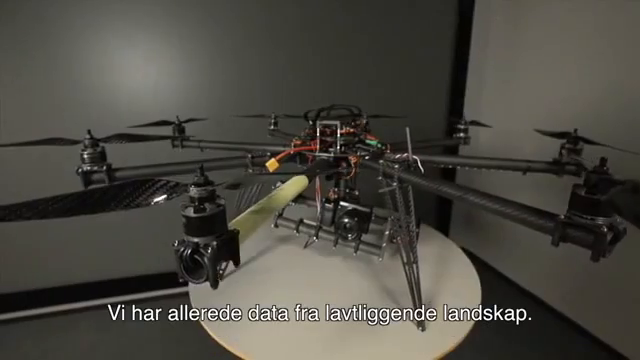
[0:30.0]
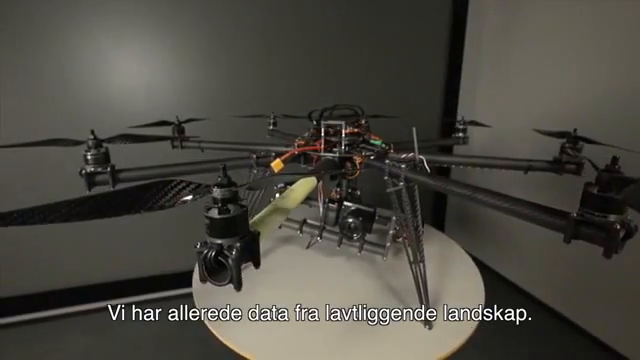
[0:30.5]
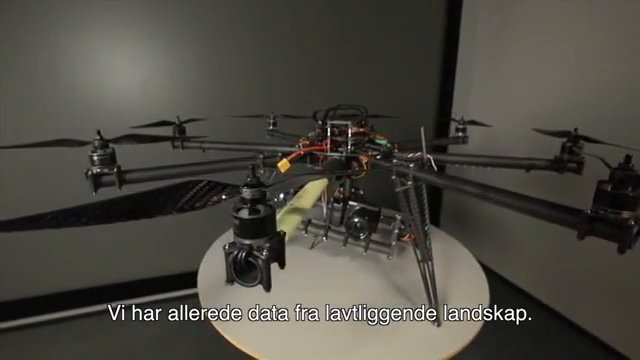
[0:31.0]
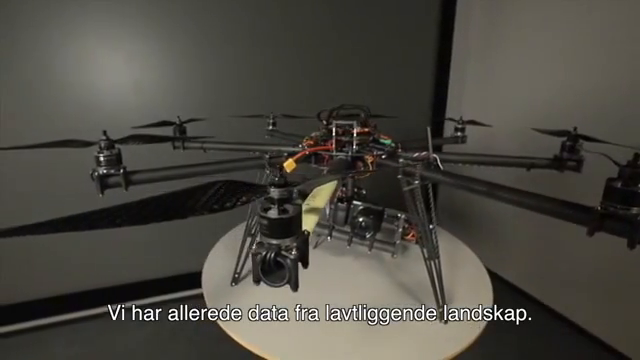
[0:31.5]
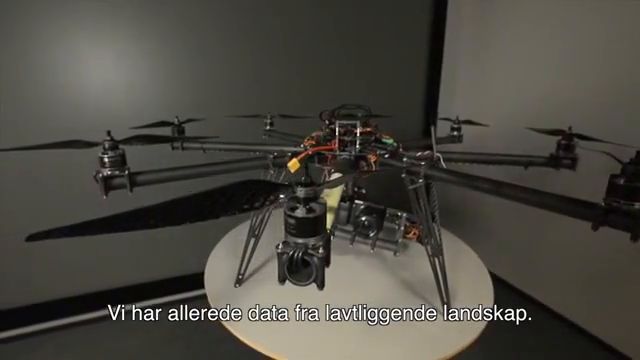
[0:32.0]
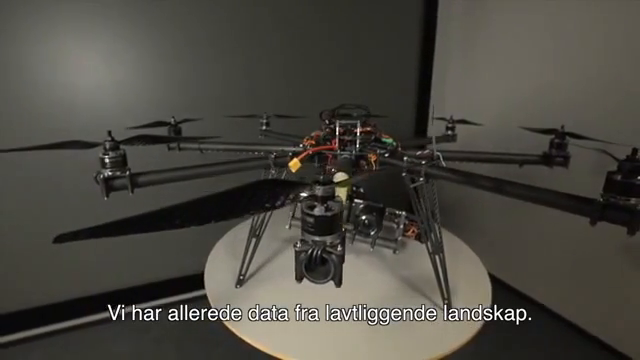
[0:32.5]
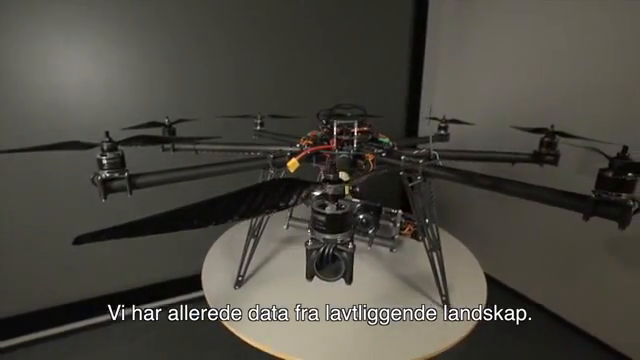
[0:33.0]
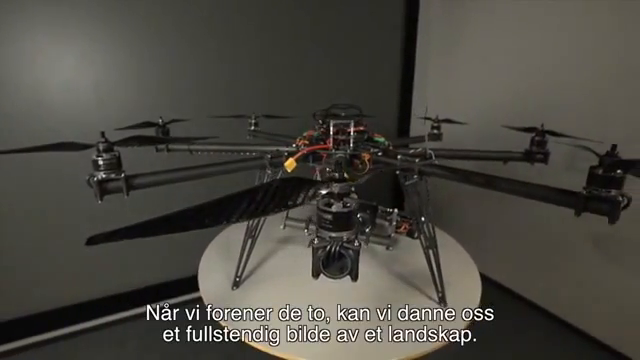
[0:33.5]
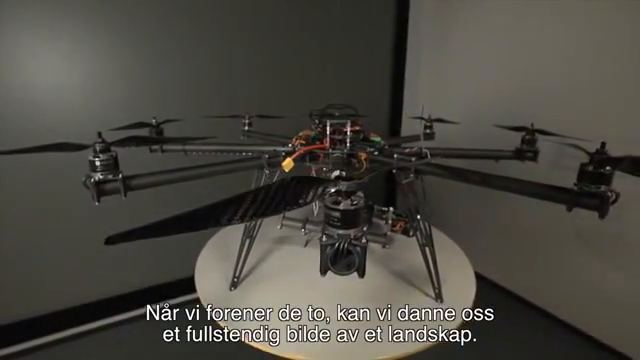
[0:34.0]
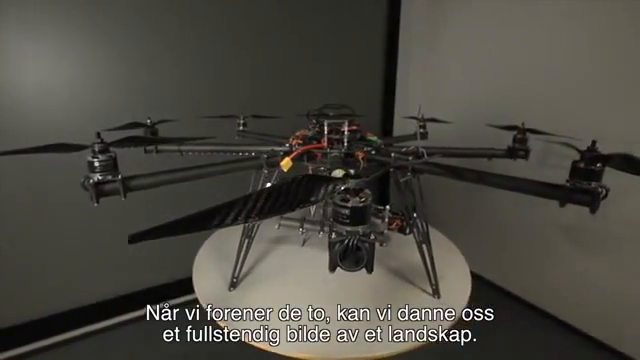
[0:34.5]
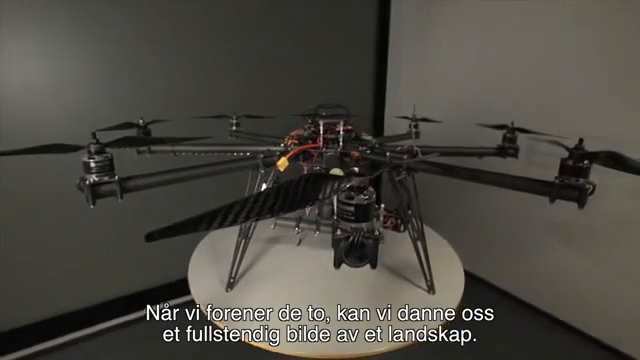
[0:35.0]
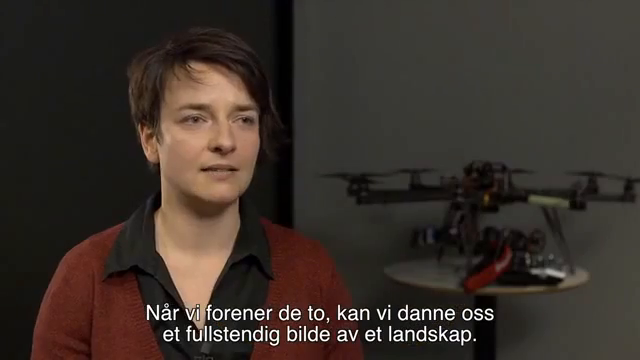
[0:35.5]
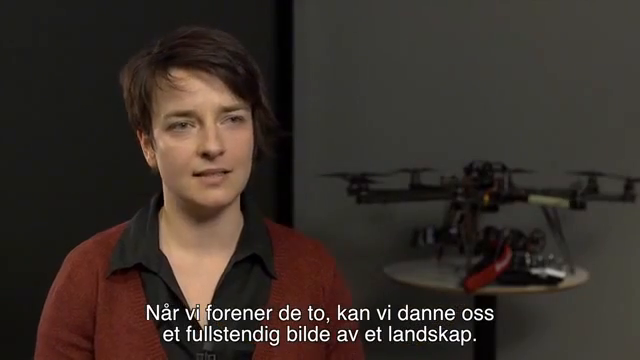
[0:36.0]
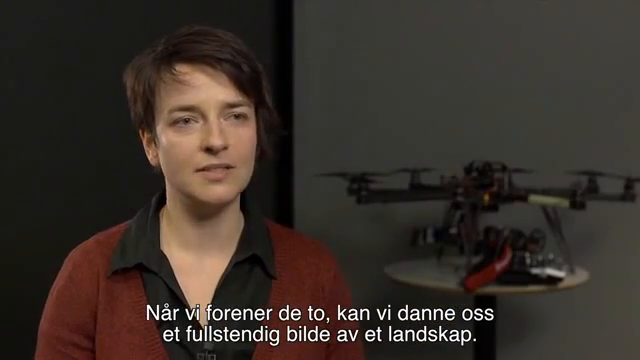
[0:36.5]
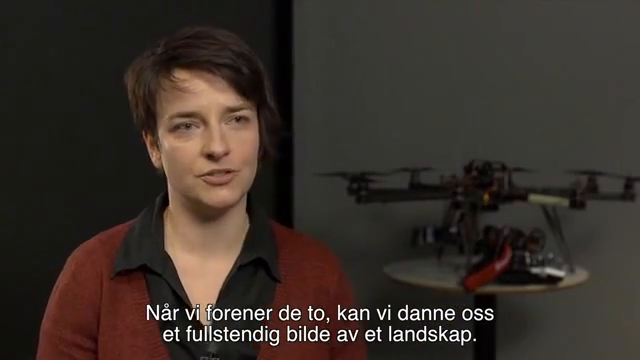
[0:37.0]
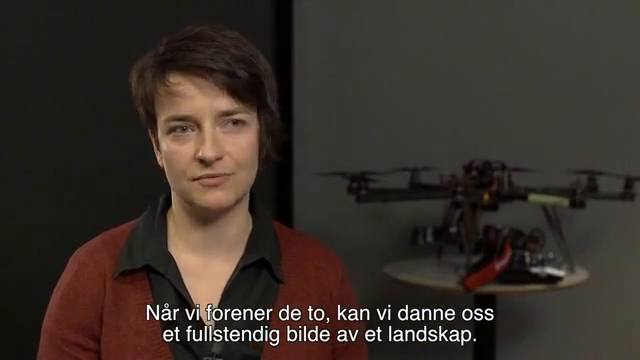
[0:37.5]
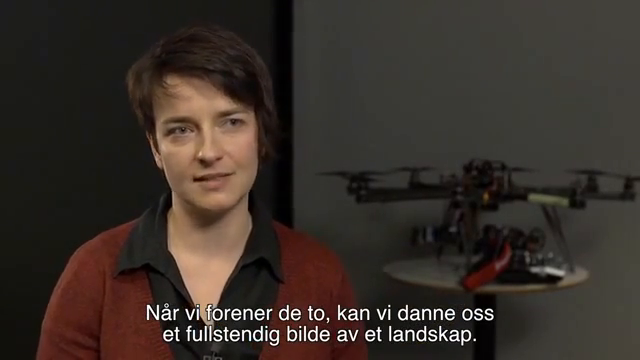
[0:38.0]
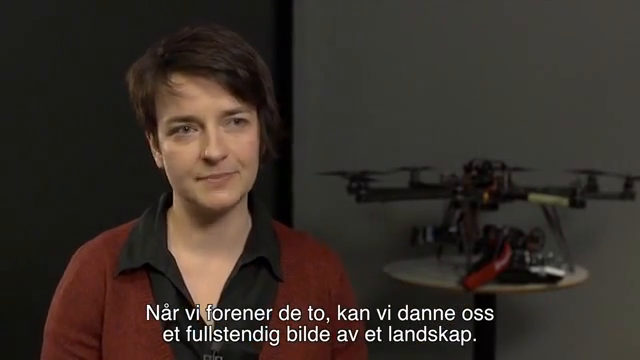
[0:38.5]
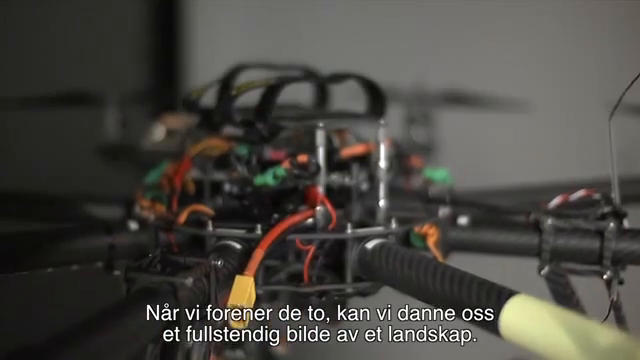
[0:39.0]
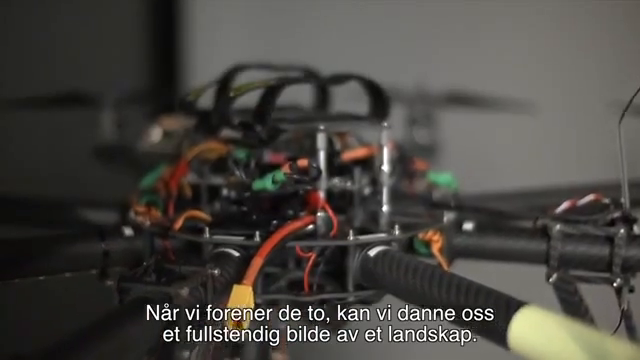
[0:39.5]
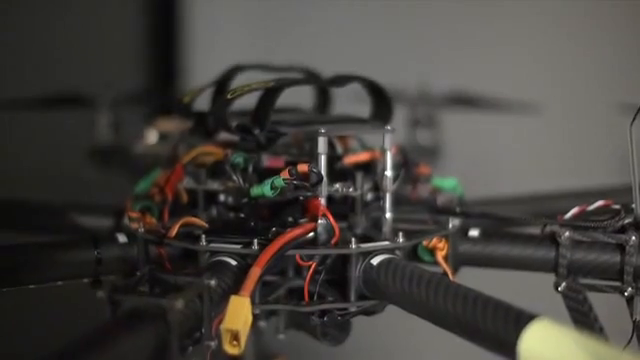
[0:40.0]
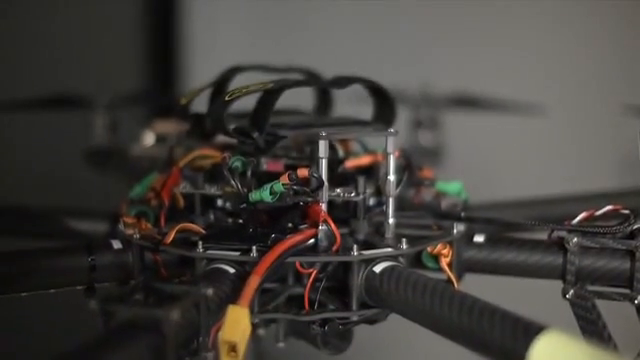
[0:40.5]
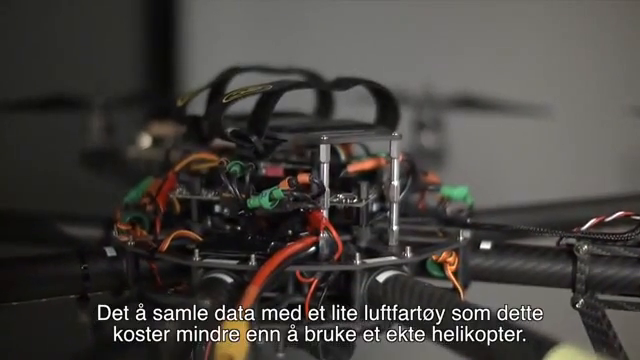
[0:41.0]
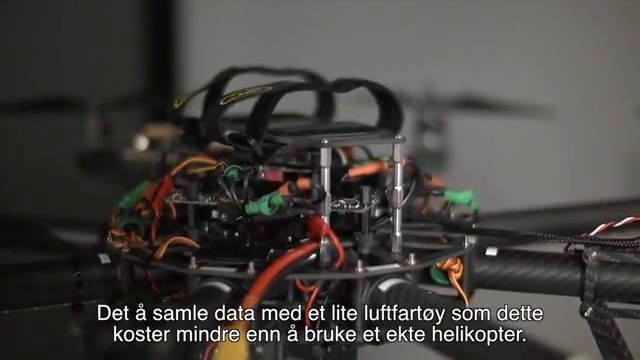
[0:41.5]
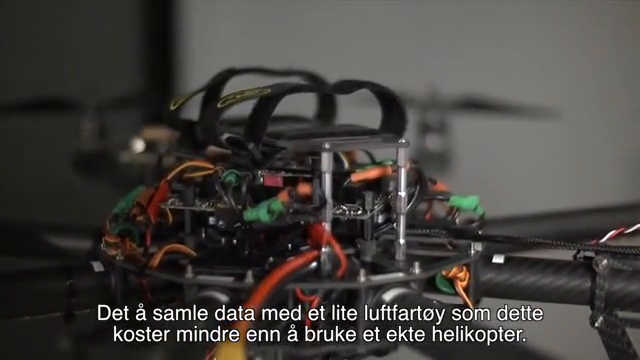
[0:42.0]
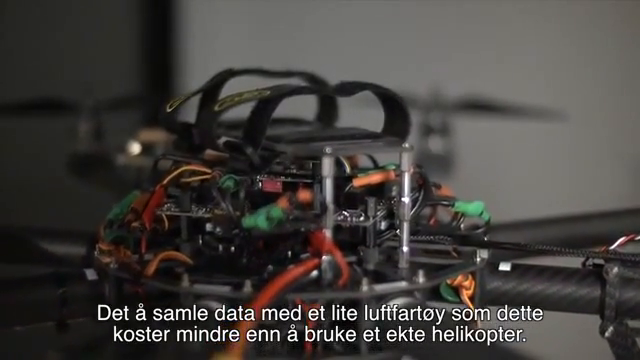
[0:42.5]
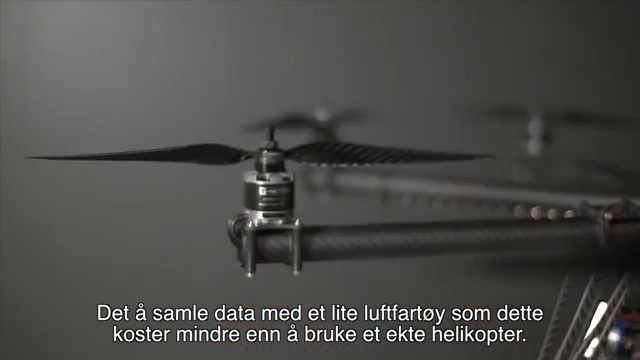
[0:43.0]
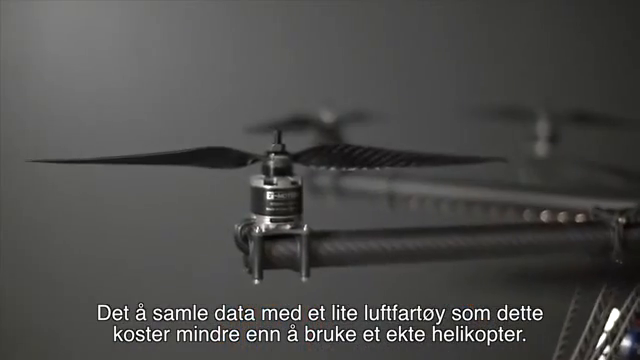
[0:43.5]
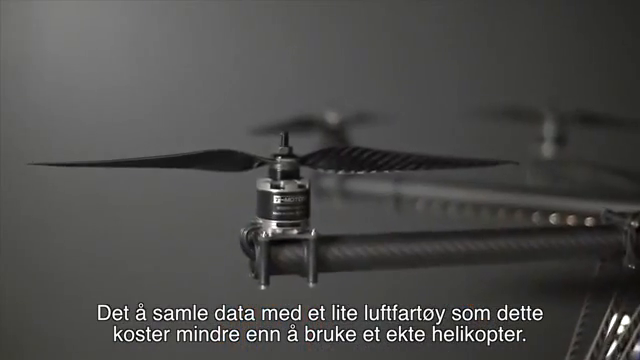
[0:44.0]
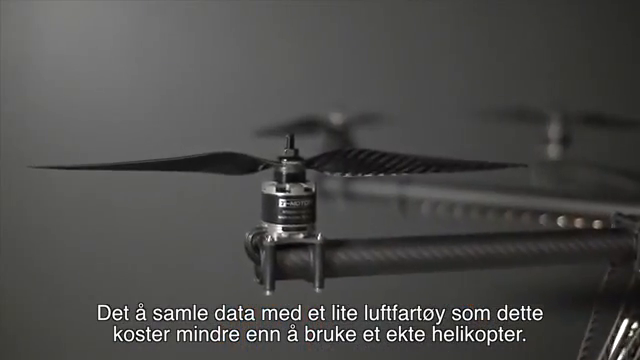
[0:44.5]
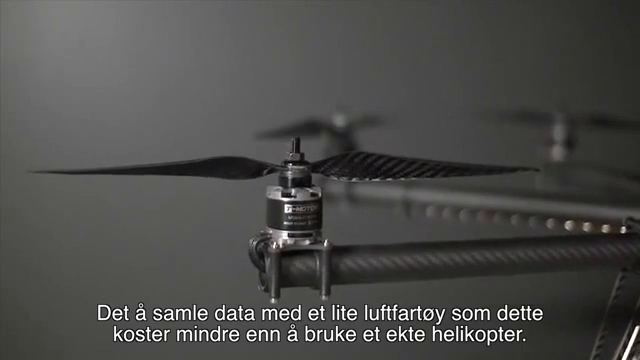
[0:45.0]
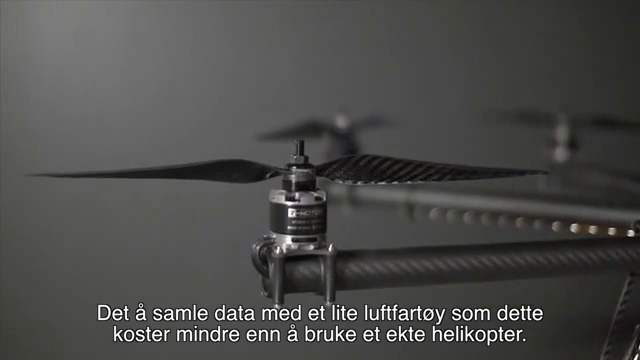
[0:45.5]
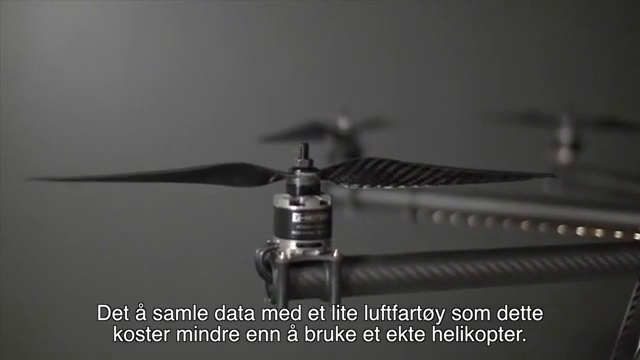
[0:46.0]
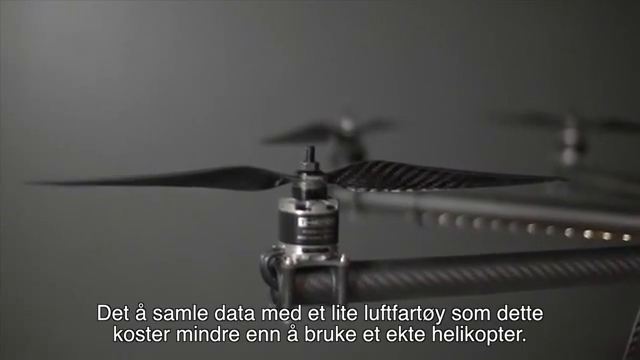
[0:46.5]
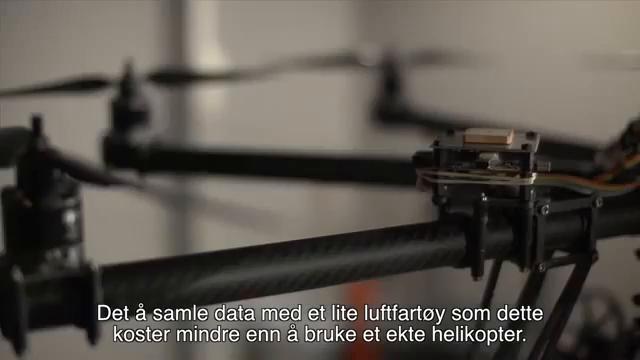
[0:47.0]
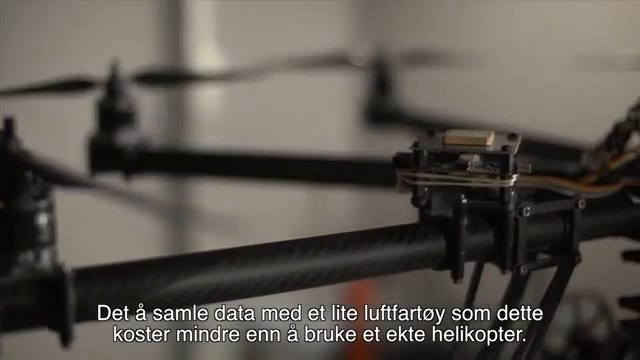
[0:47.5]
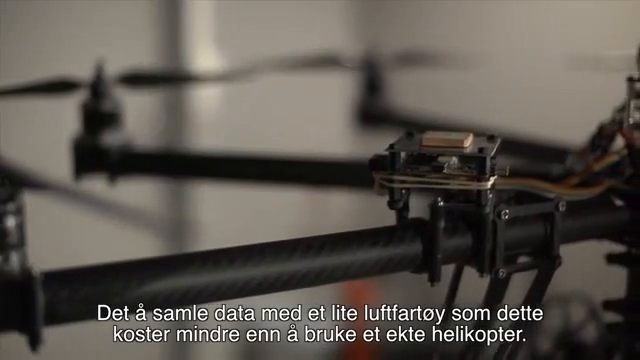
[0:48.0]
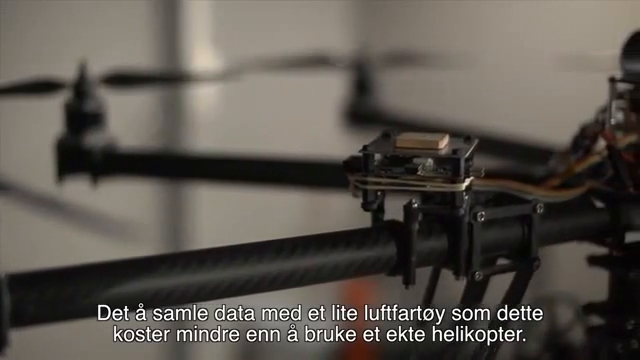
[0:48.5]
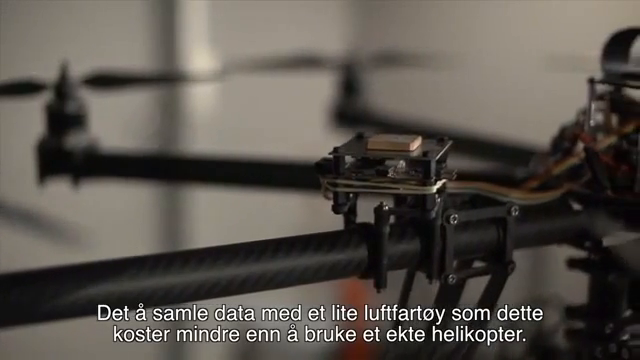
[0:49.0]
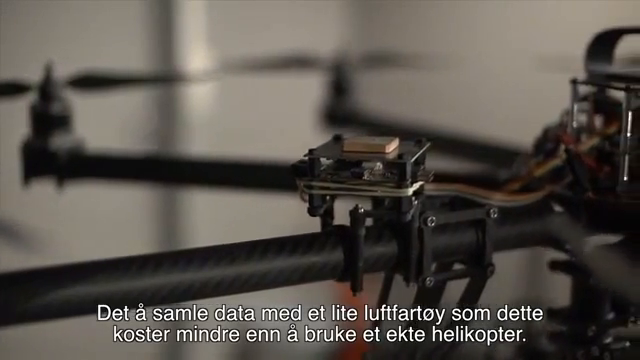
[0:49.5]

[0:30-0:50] The shot shows the drone helicopter on its table again, simply placed there with its power off, while the camera recording it circles it in a slow-motion way. The drone helicopter has seven blades used to make it fly and a camera attached to it. A few seconds in, the video returns to the man who held the helicopter, and he is being interviewed again, with caption words in a different language at the bottom of the screen. He wears a red shirt with a black collar. The scene then changes to the drone helicopter's exposed wires, colored red, green and orange, and the camera begins to zoom in on them. In the next shot, the camera zooms into one of the drone helicopter's blades.